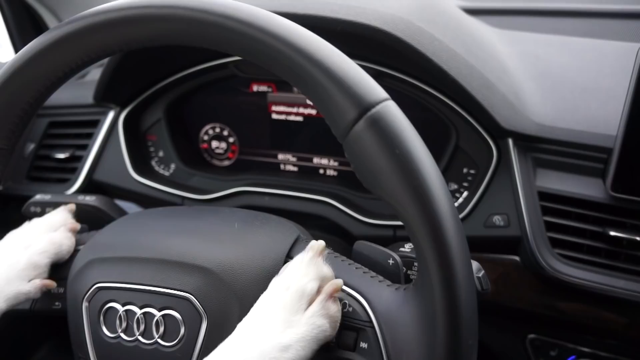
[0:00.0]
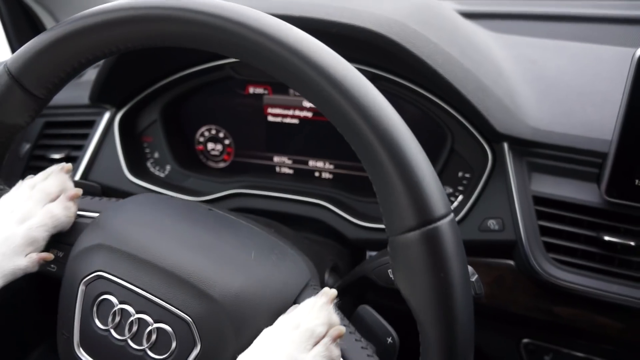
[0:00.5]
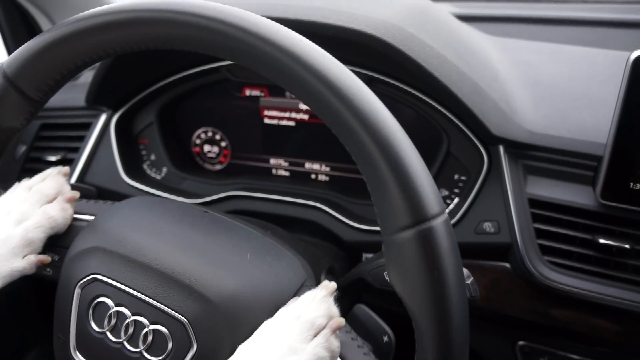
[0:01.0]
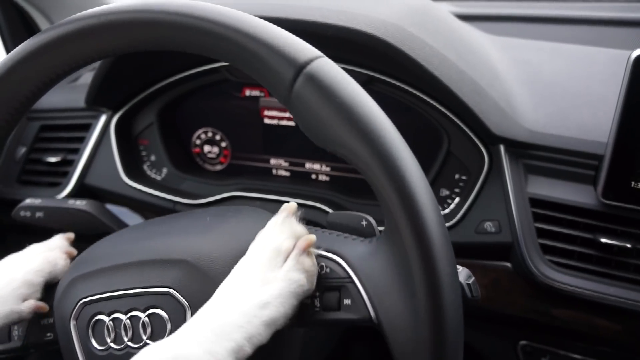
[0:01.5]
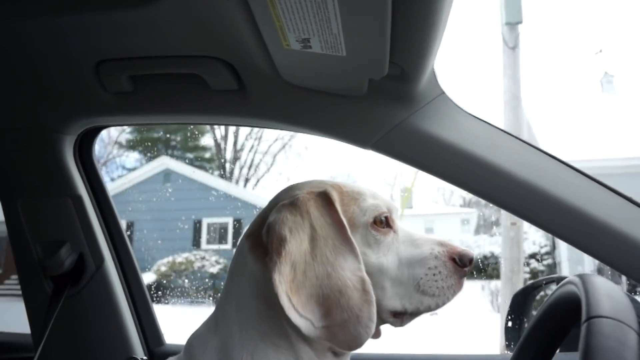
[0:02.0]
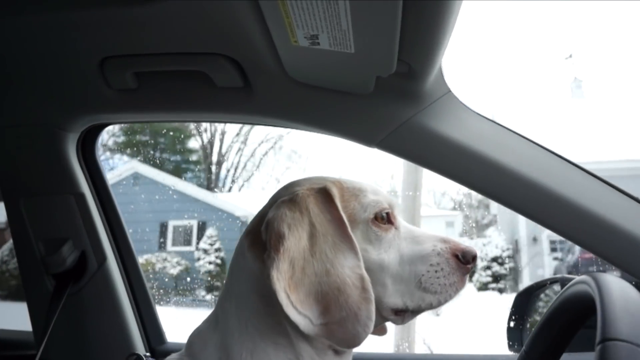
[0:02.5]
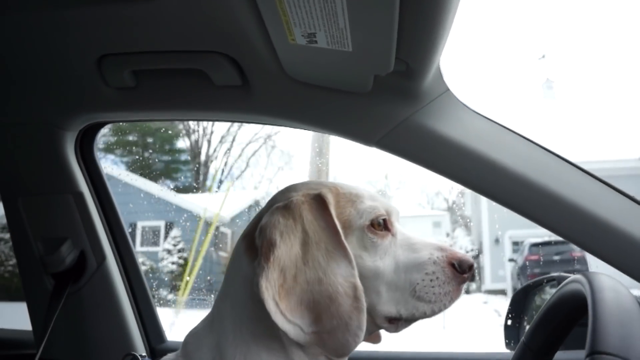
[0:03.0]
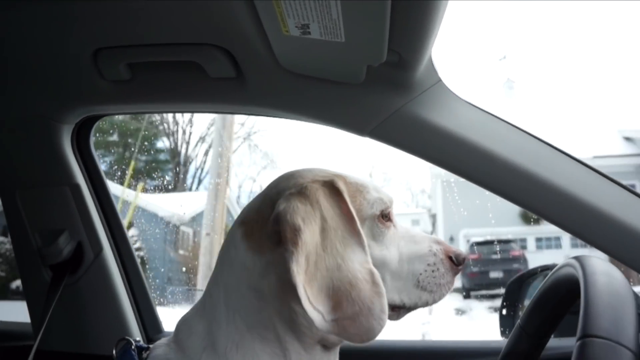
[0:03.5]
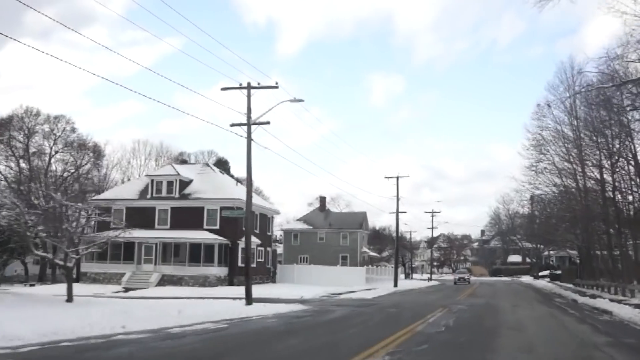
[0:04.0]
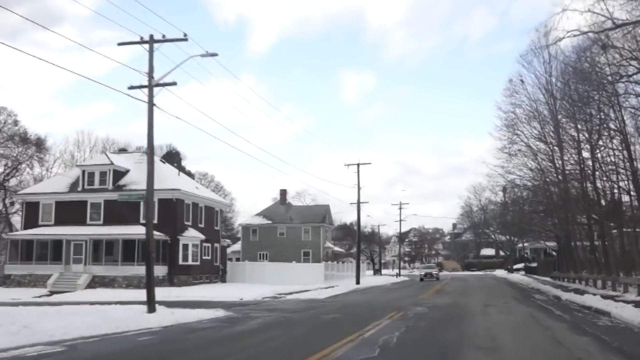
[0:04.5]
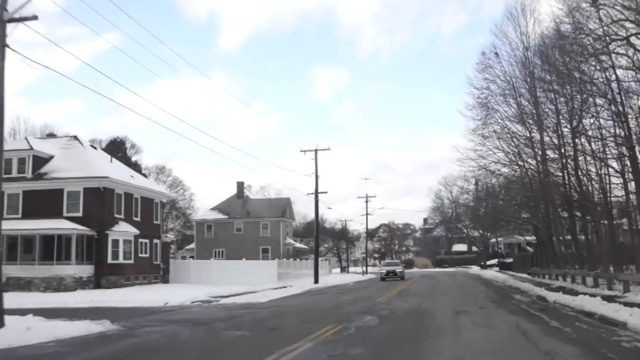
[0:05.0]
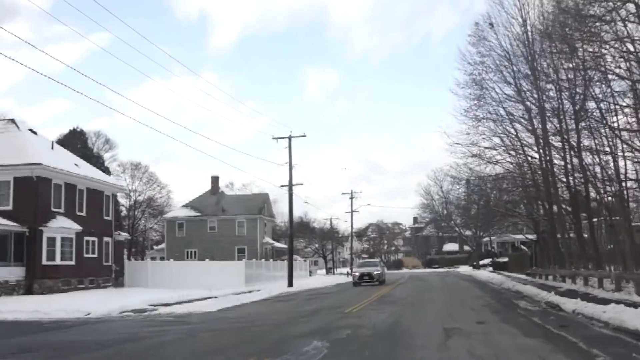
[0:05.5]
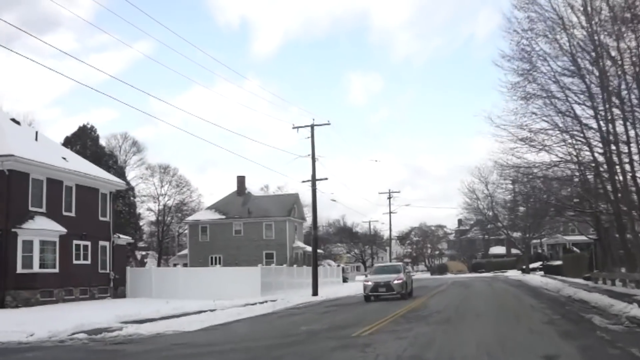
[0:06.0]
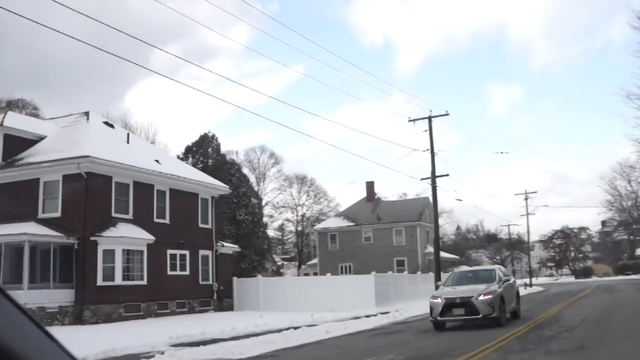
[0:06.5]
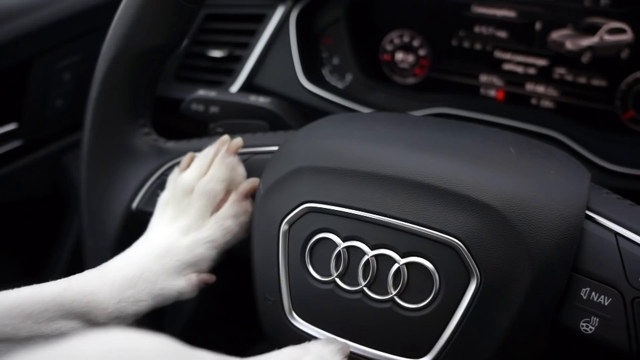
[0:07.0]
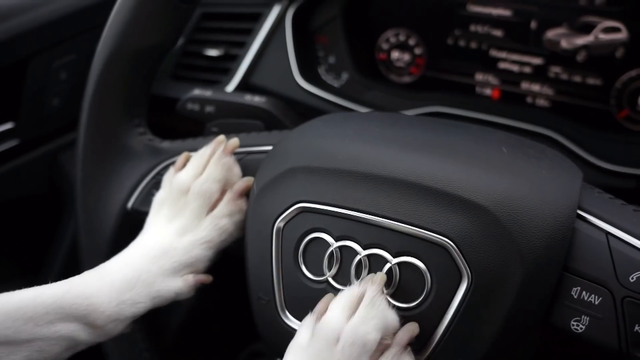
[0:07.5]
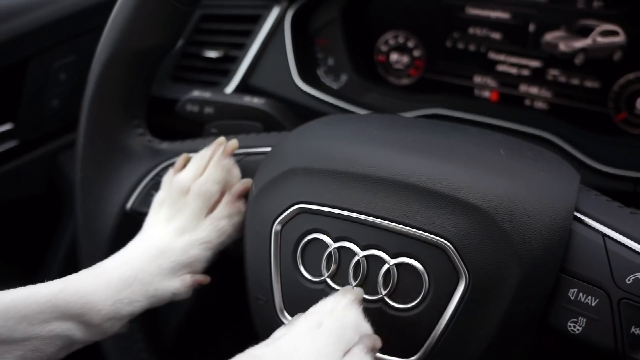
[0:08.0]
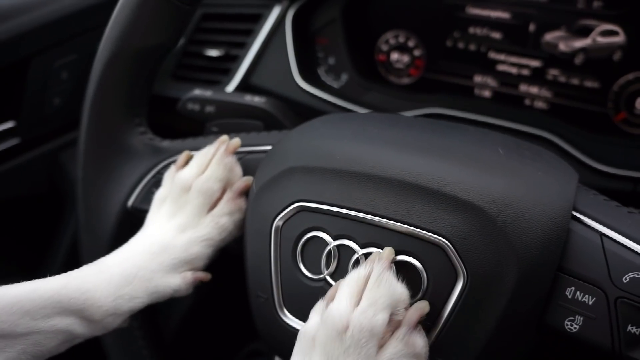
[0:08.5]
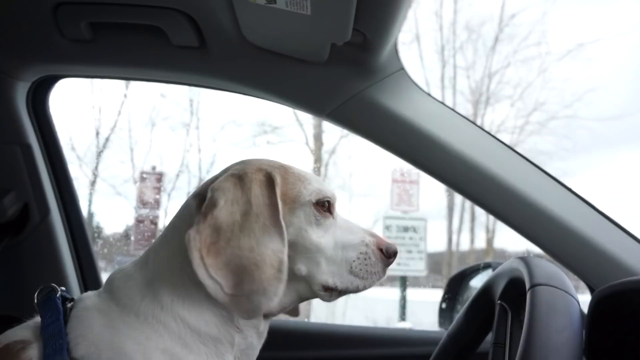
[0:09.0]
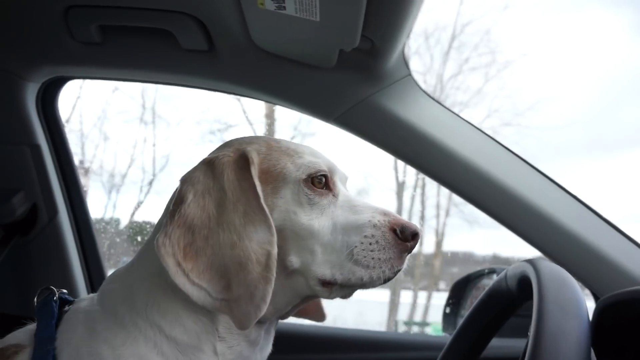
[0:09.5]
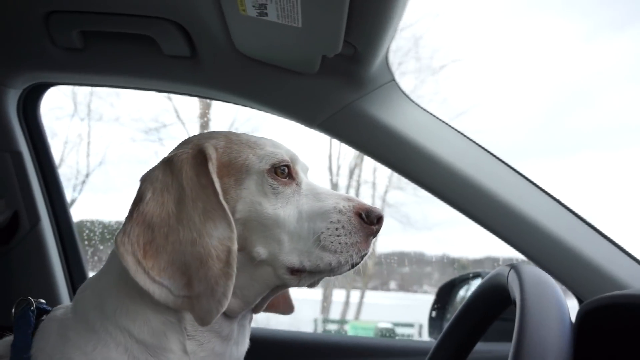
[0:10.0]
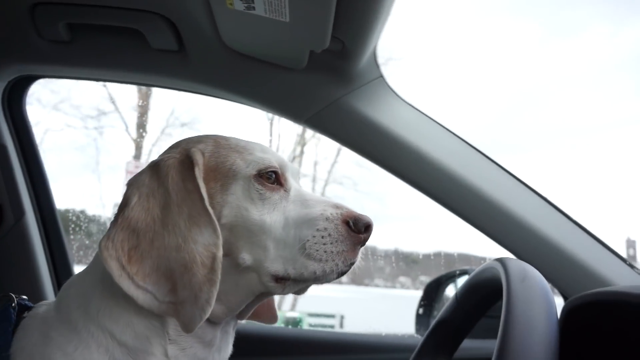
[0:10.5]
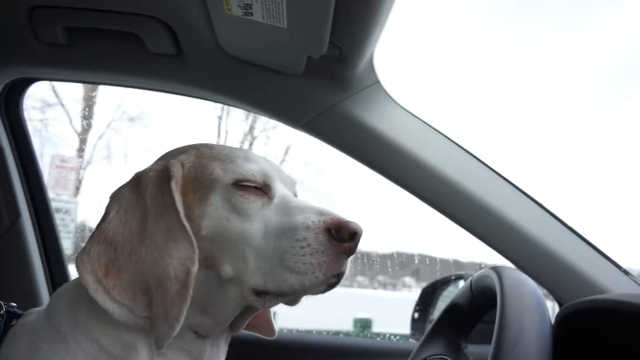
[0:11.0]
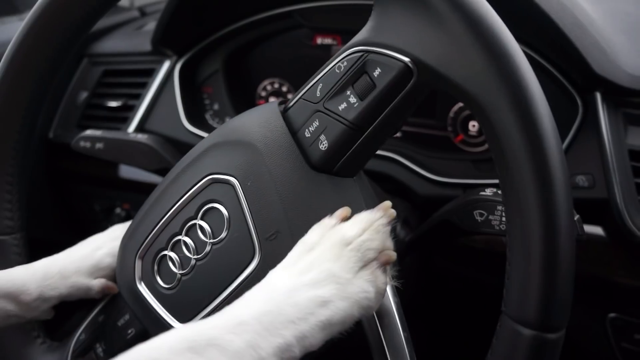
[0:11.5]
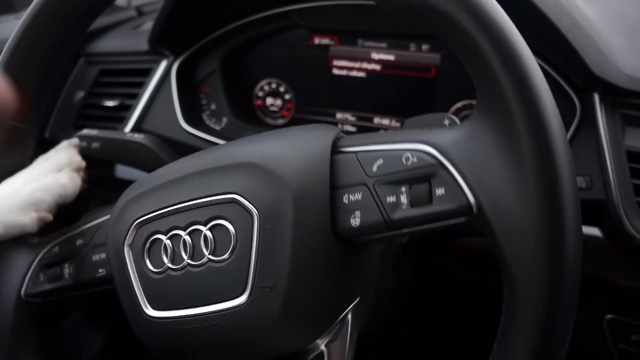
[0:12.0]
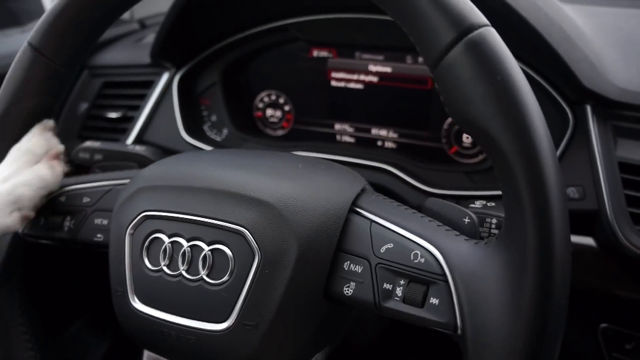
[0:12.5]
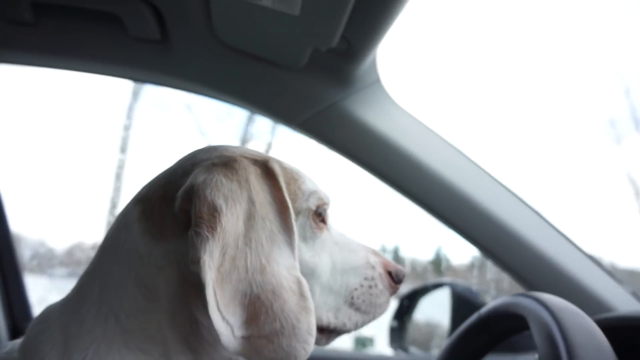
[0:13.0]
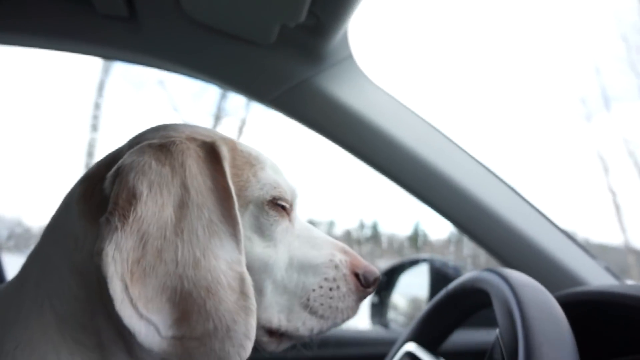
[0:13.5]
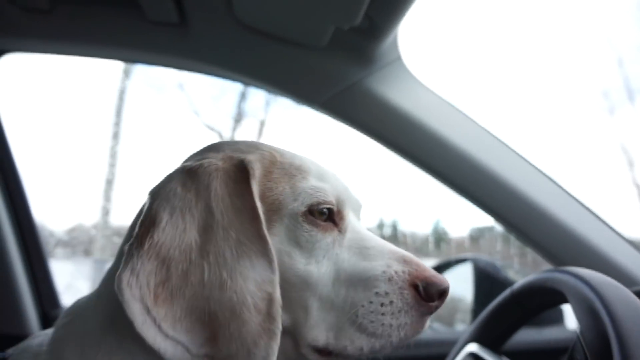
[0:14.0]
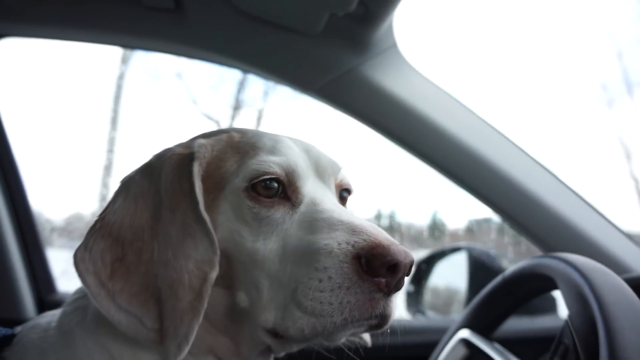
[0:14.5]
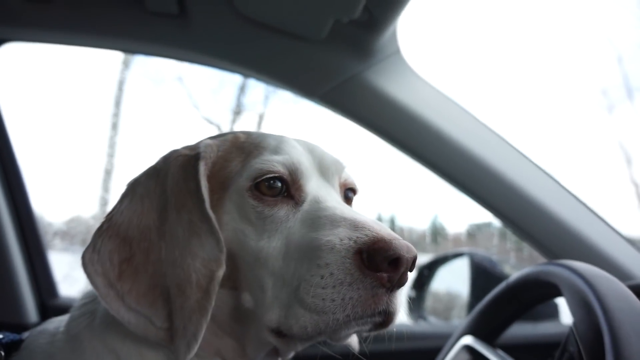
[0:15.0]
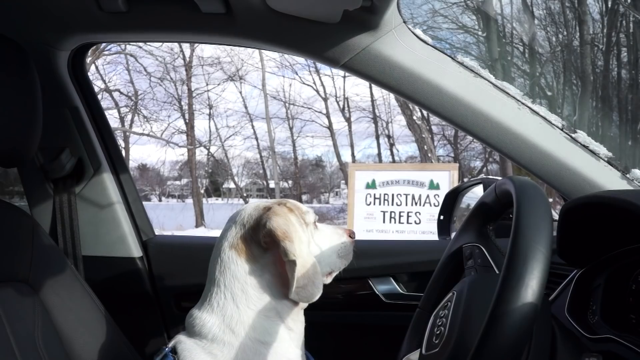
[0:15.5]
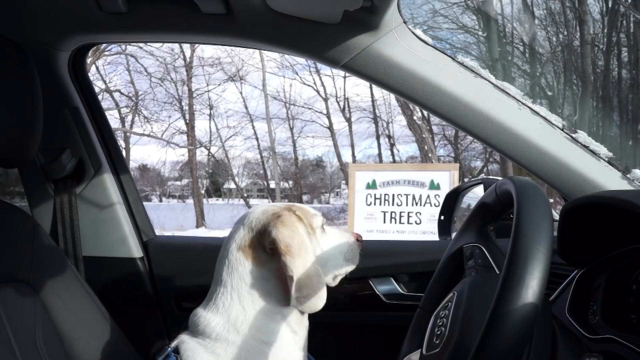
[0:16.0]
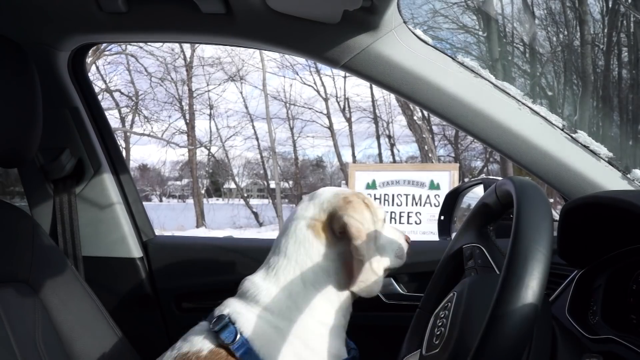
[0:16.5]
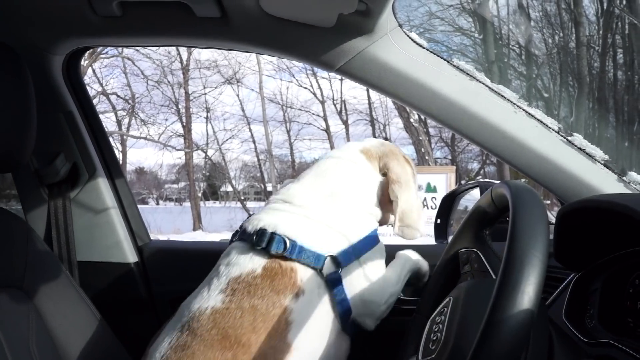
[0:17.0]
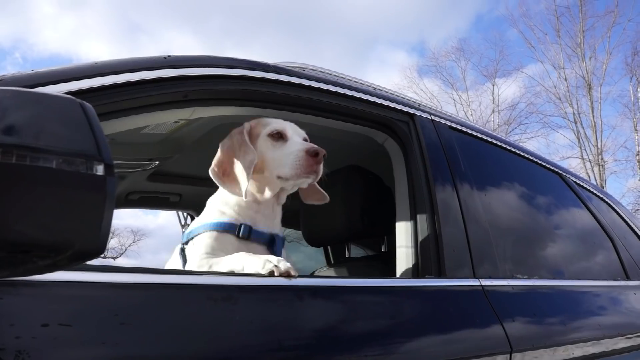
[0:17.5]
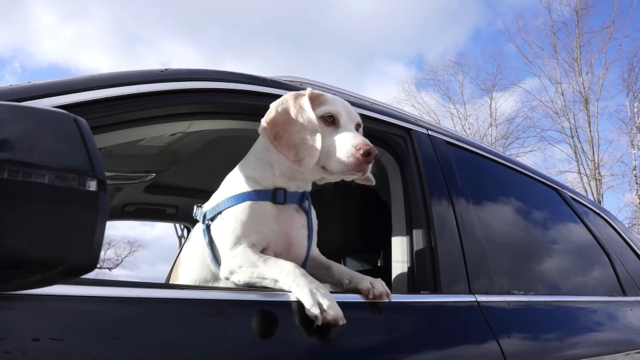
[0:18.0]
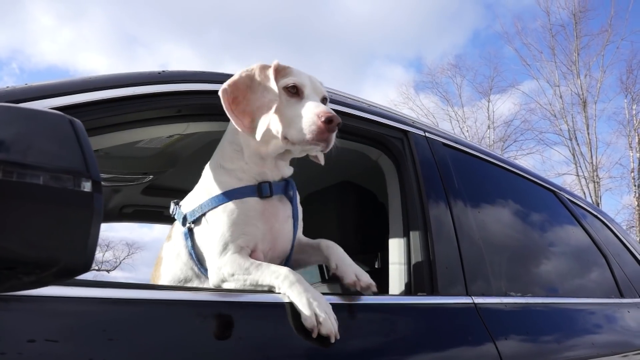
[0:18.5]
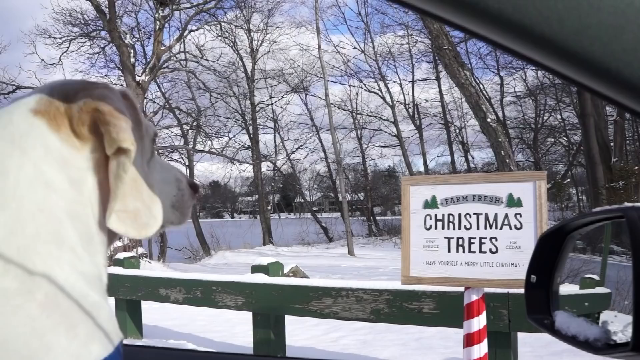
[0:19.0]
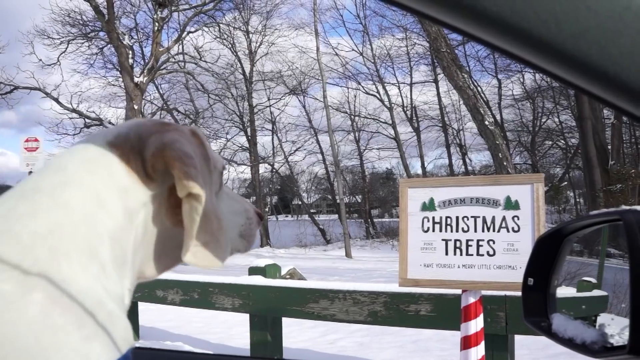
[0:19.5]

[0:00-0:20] A dog is in a car driving down the street of a midwestern town while it snows. The car is a black Audi, and the Audi emblem is visible. The dog turns the steering wheel with both of its paws and presses the horn in the middle of the wheel with a paw. It drives all the way to a park with a sign that says "Christmas trees" and stops there. There is a Christmas tree sign and a stand that looks like a candy cane, suggesting it is apparently the holiday season.